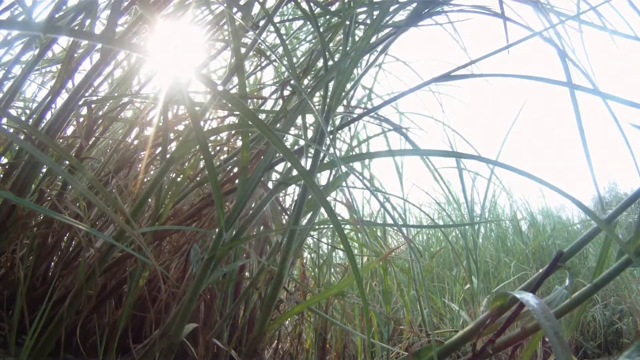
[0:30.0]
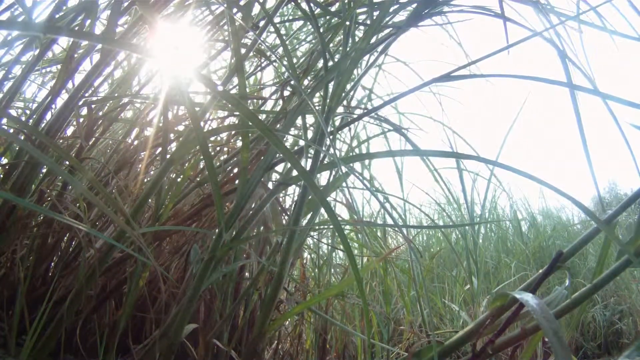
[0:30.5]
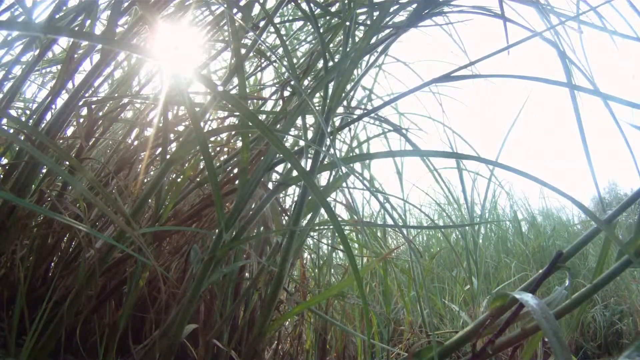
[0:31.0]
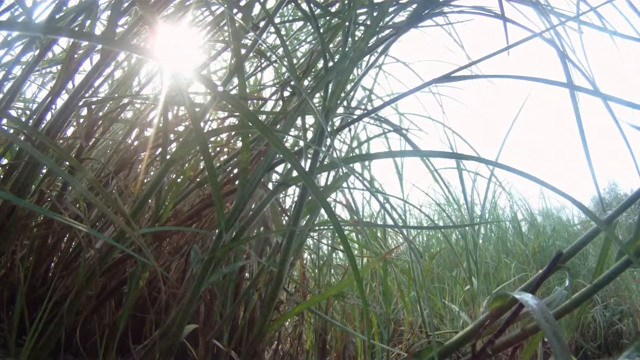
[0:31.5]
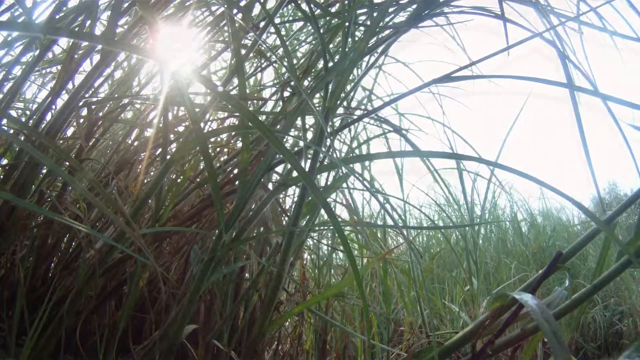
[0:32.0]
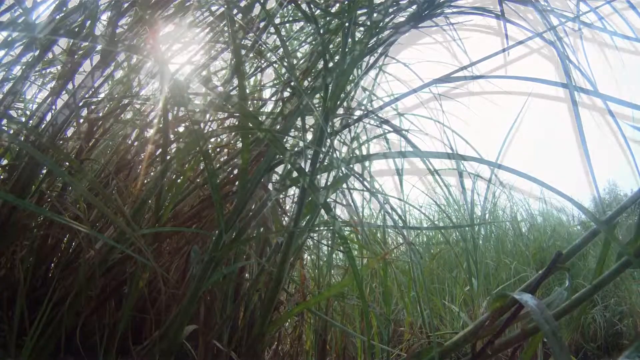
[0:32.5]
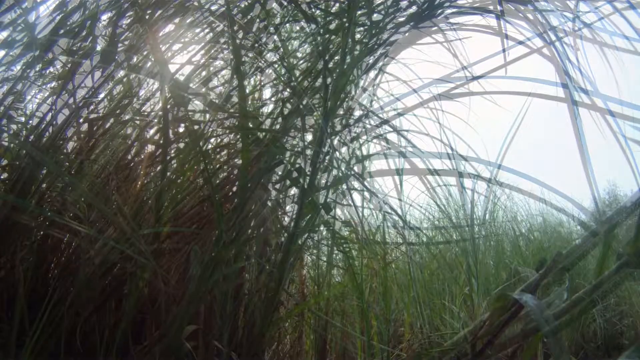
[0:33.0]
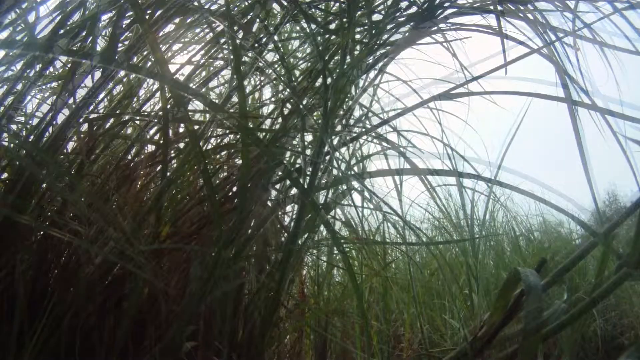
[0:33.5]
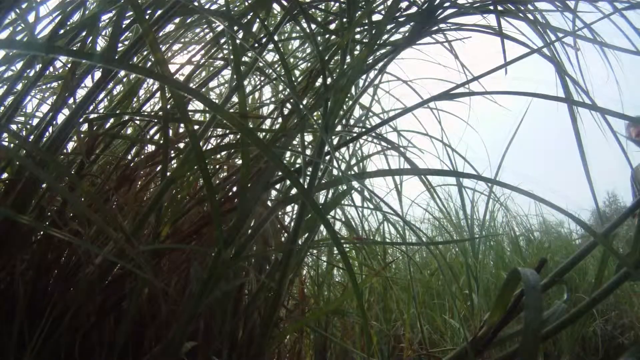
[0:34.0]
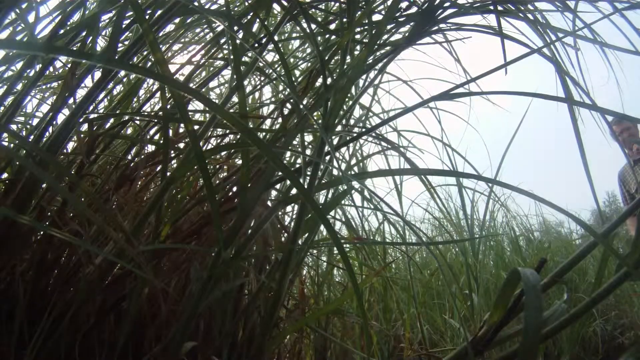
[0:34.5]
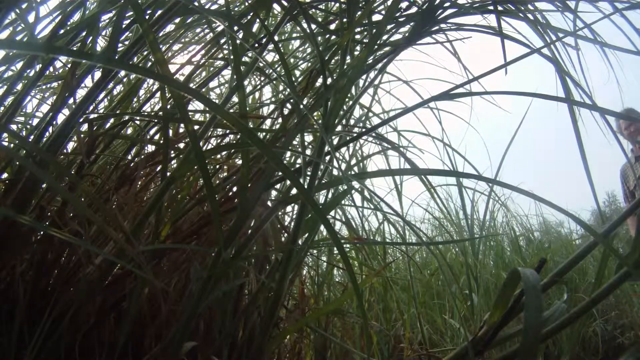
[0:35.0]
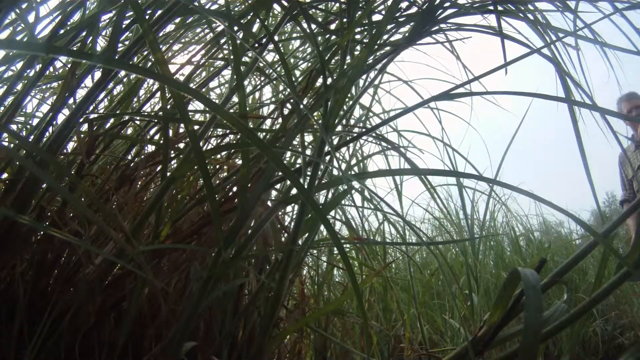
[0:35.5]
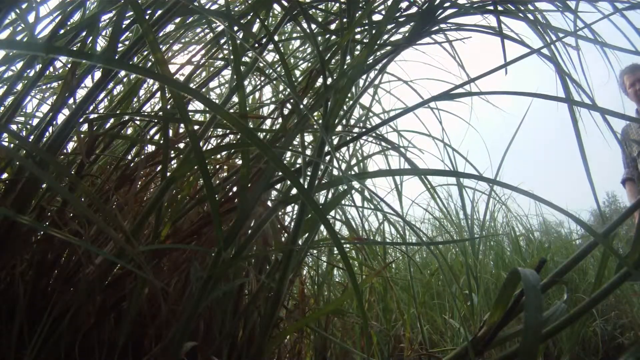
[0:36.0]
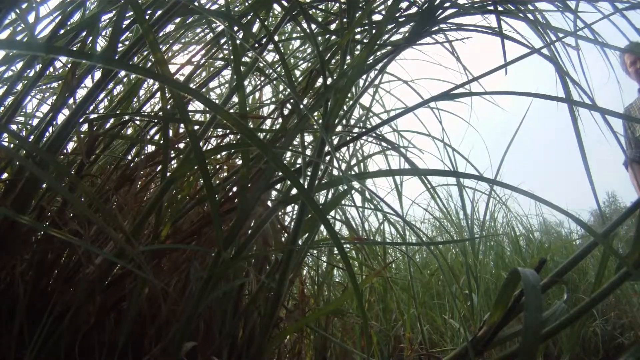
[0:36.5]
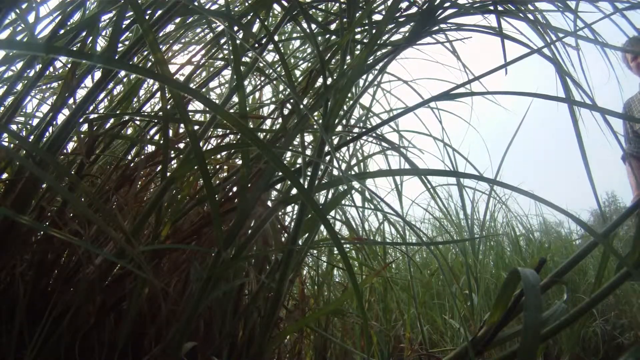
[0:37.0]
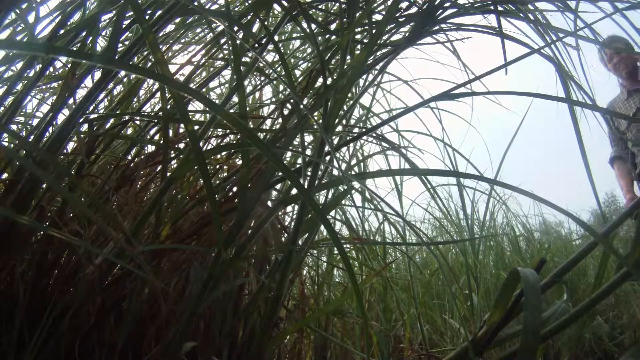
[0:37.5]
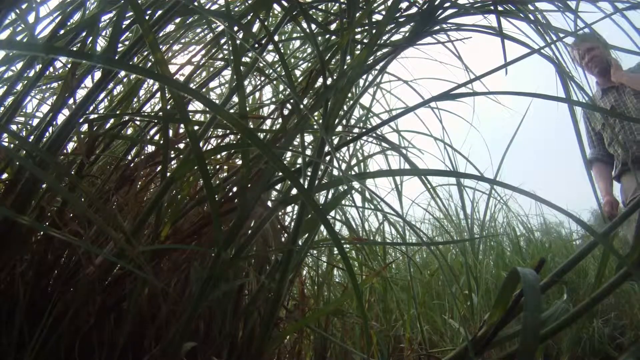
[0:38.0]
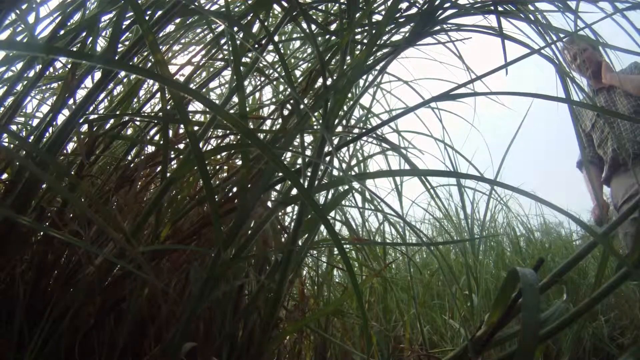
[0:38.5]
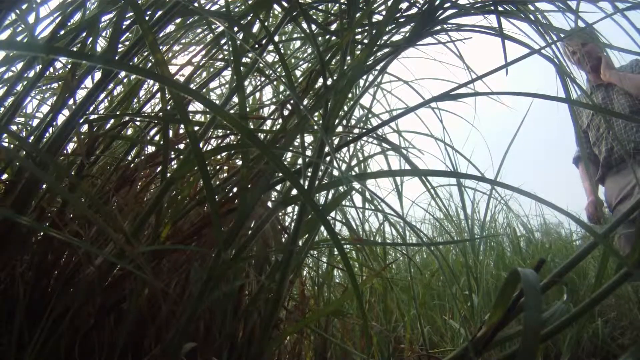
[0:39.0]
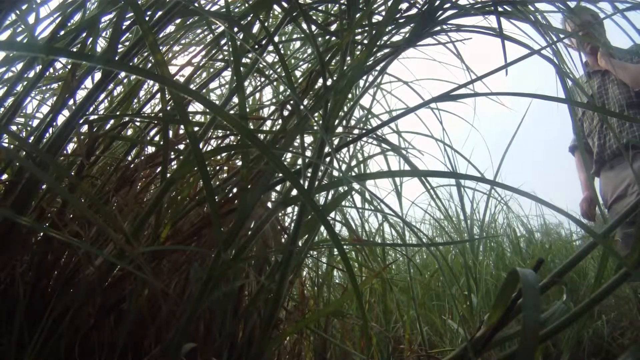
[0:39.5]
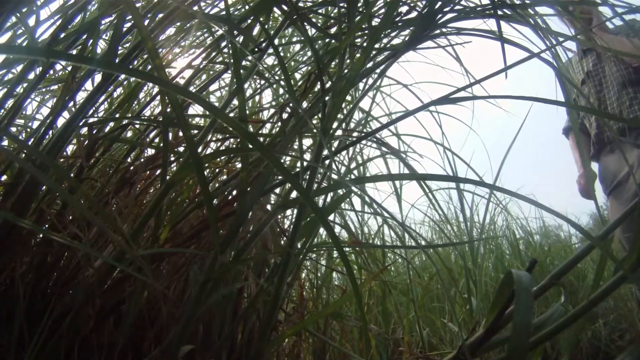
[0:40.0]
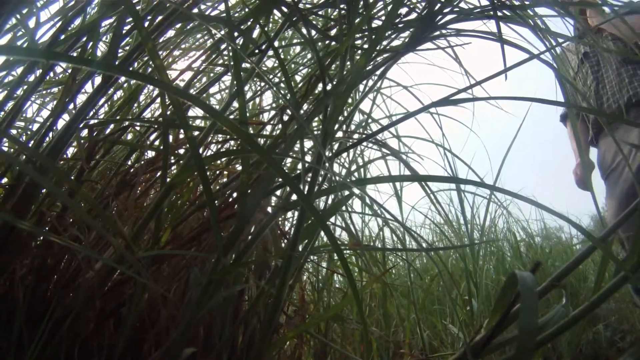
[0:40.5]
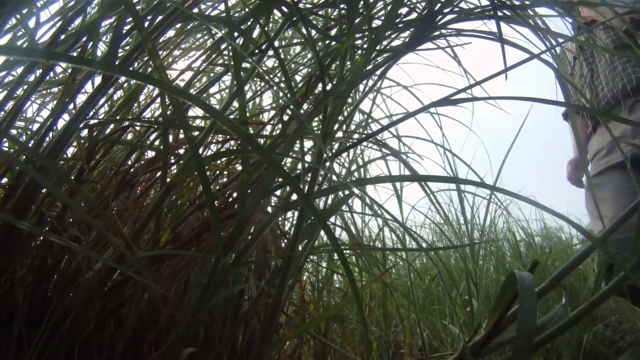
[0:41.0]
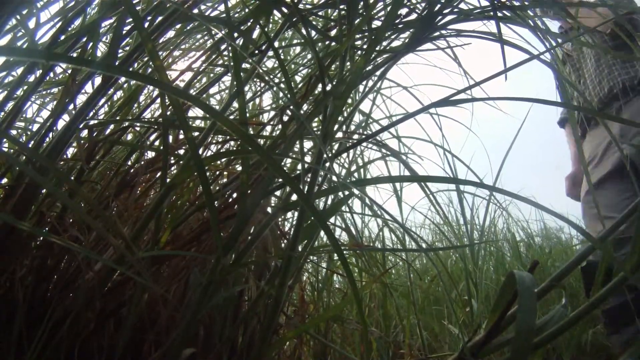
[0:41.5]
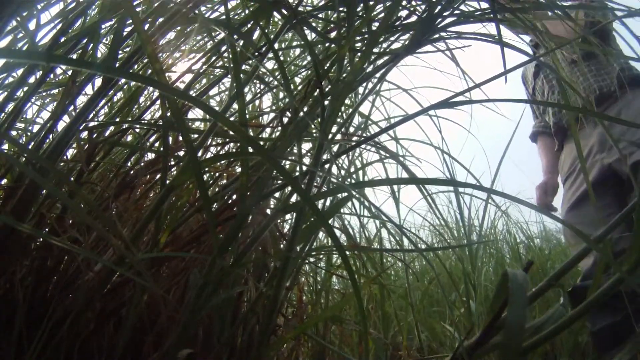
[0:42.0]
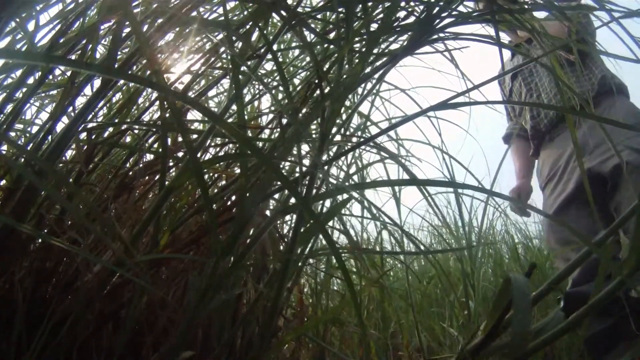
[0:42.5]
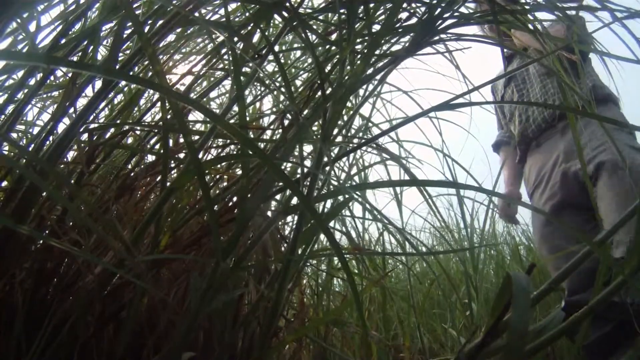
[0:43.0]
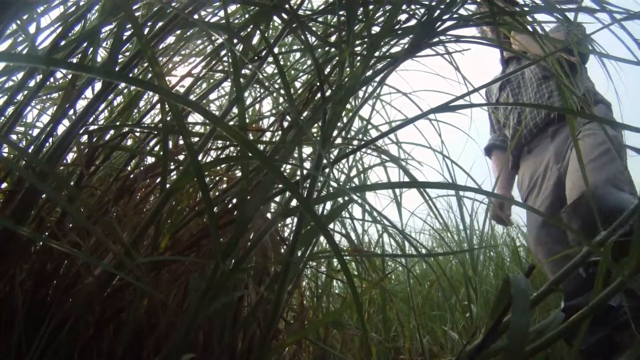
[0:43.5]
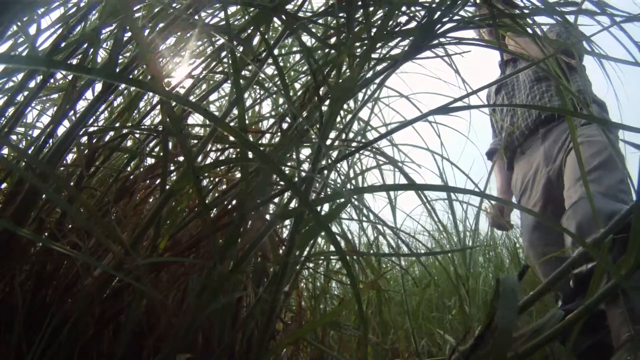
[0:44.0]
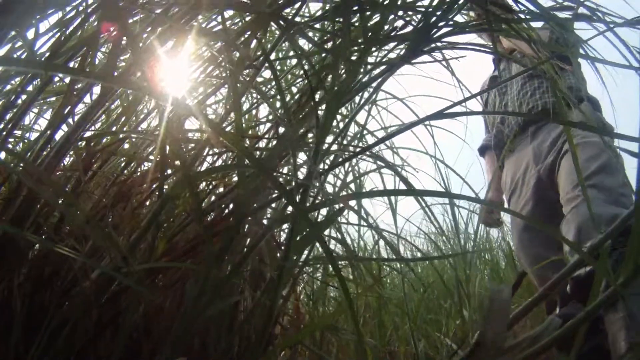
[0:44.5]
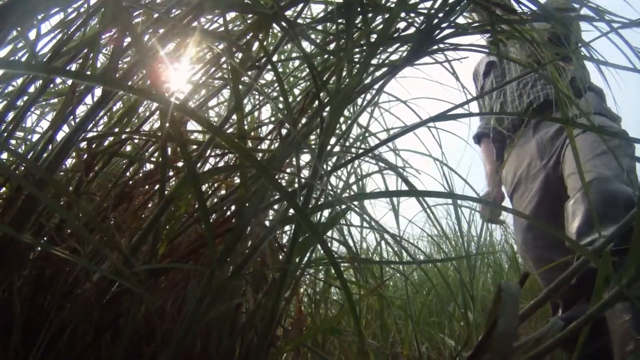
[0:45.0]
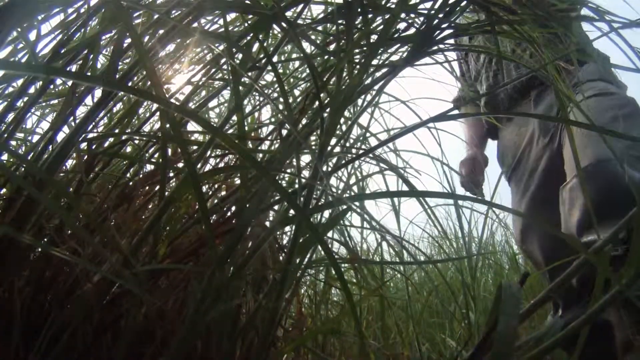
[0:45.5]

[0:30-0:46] The same camera continues filming. The footage cuts ahead in time, and the sun is kind of lower. The man who set up the camera comes back for it with sort of a nervous look on his face. He seems to be wearing a green plaid shirt and sort of pale gray pants. With his hand on his neck, he slowly walks up to the camera, so slowly that he seems kind of scared of it, as if he is really nervous.